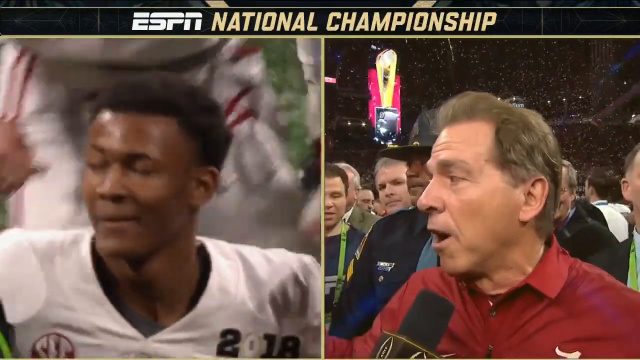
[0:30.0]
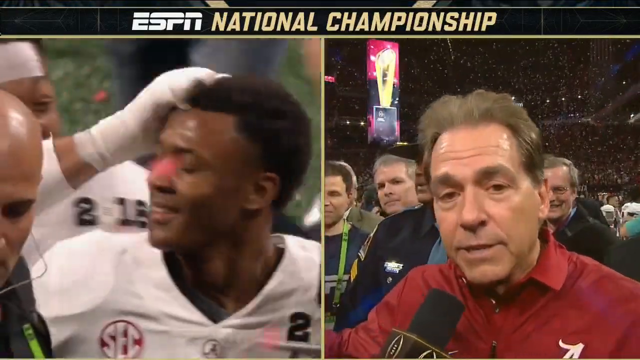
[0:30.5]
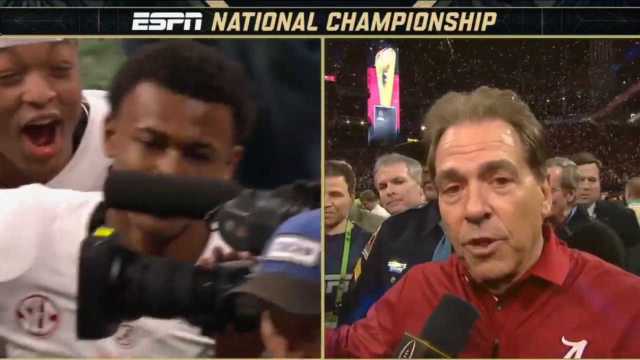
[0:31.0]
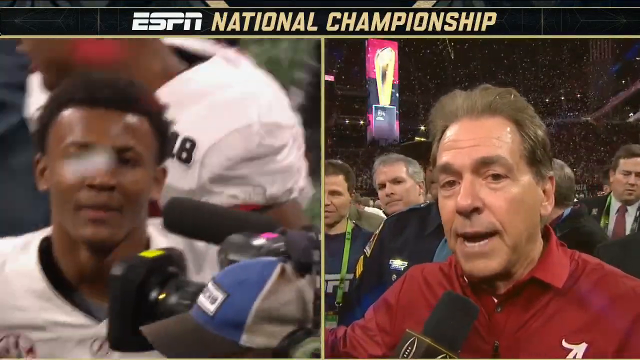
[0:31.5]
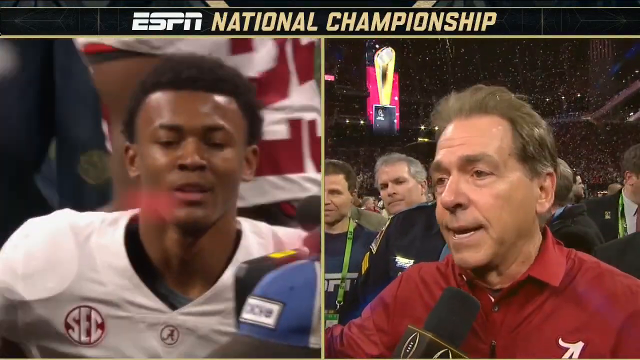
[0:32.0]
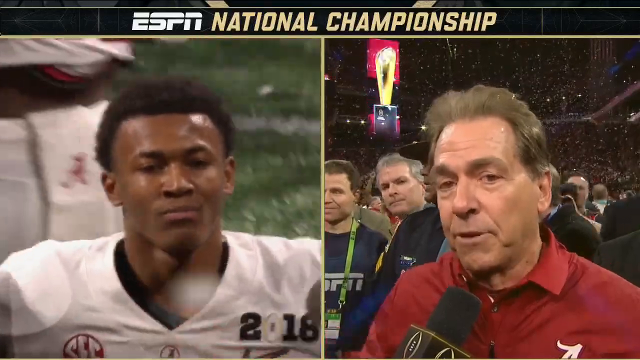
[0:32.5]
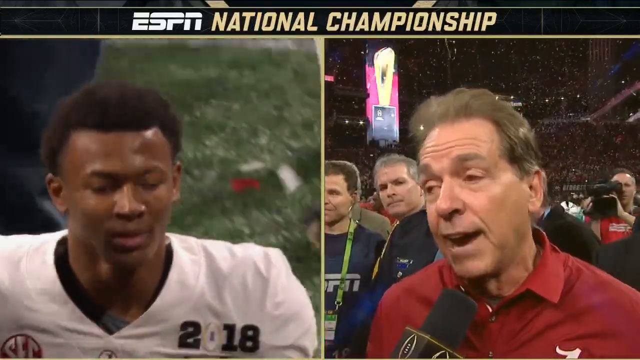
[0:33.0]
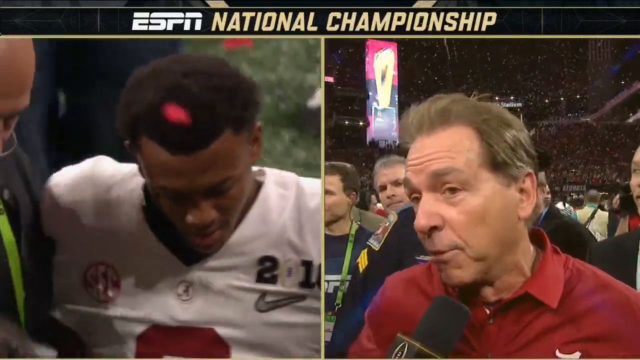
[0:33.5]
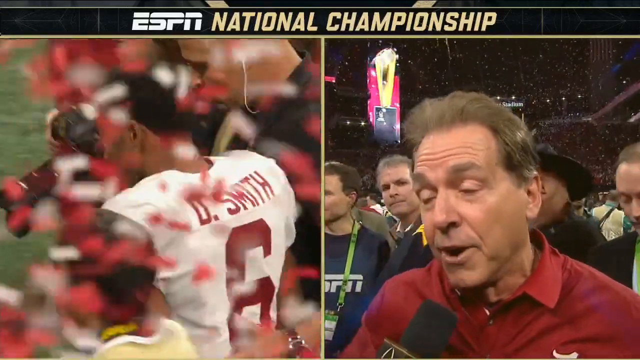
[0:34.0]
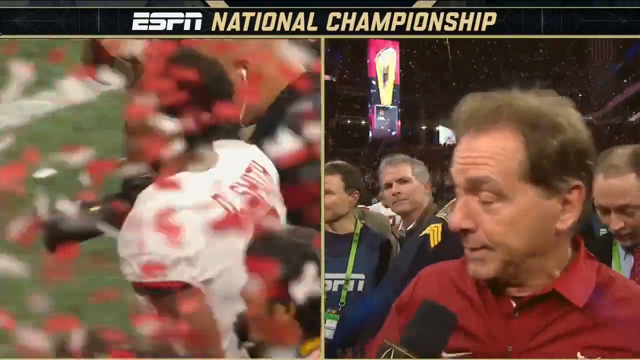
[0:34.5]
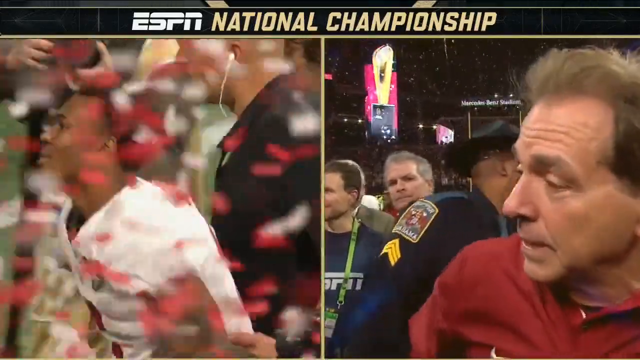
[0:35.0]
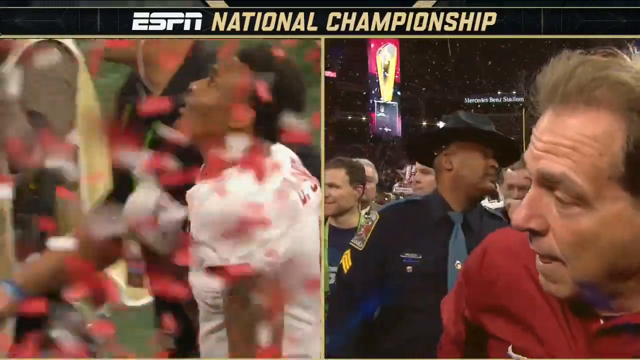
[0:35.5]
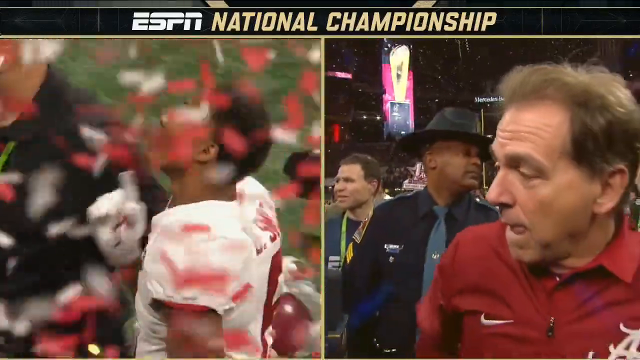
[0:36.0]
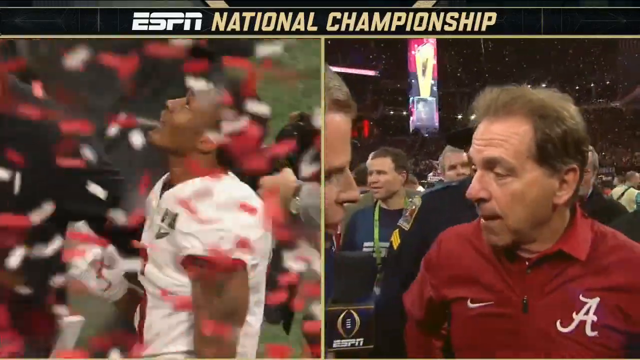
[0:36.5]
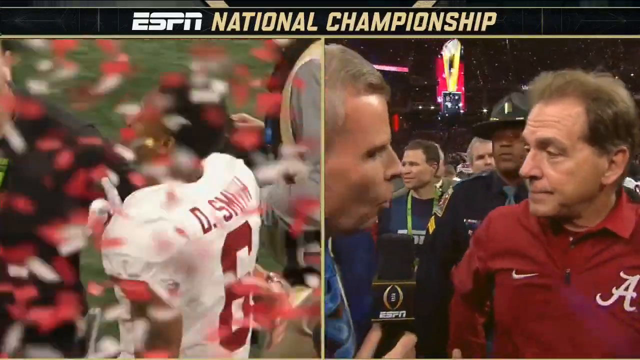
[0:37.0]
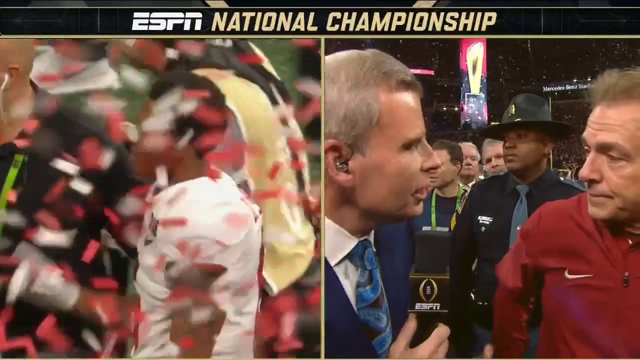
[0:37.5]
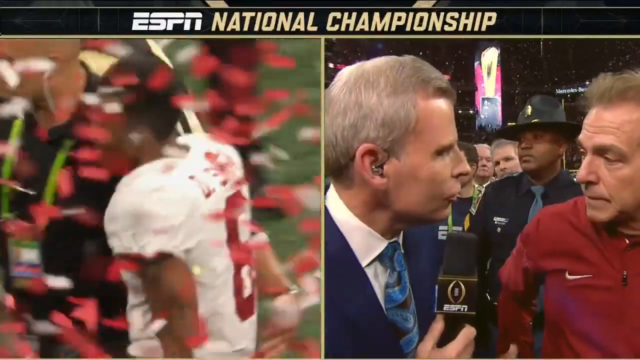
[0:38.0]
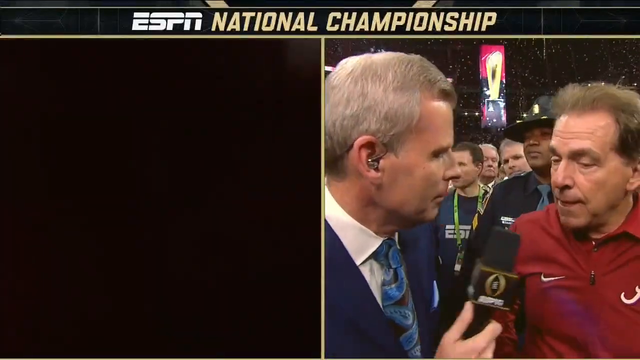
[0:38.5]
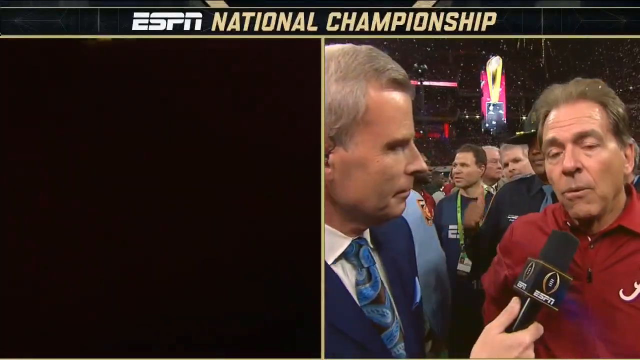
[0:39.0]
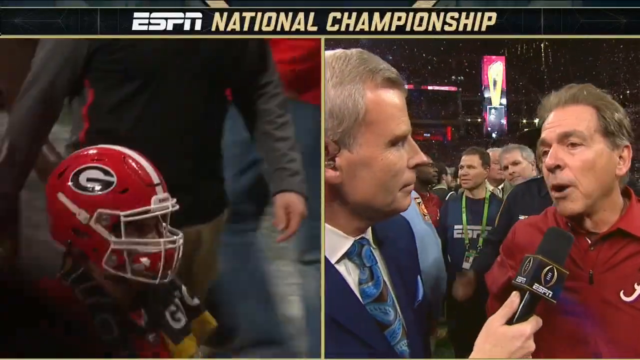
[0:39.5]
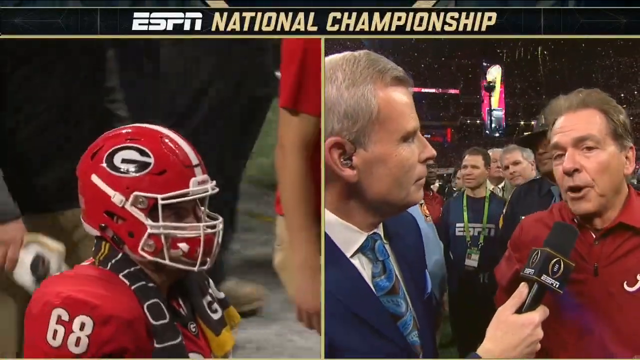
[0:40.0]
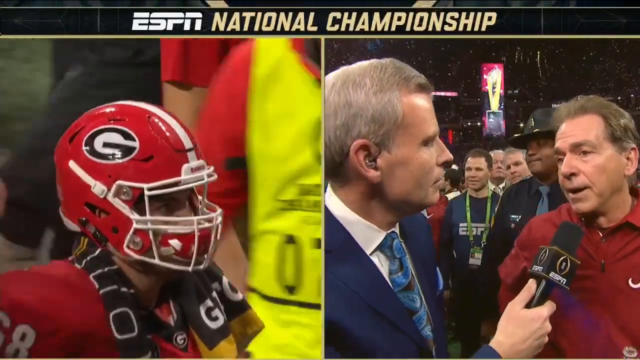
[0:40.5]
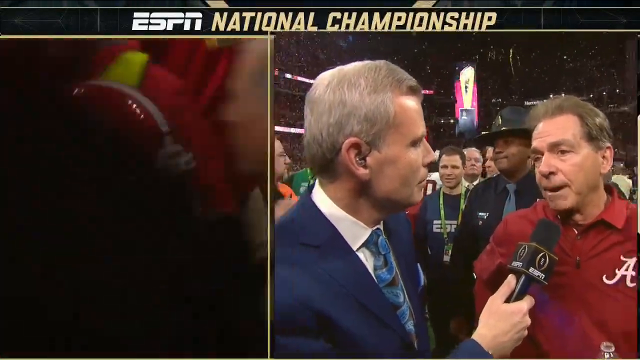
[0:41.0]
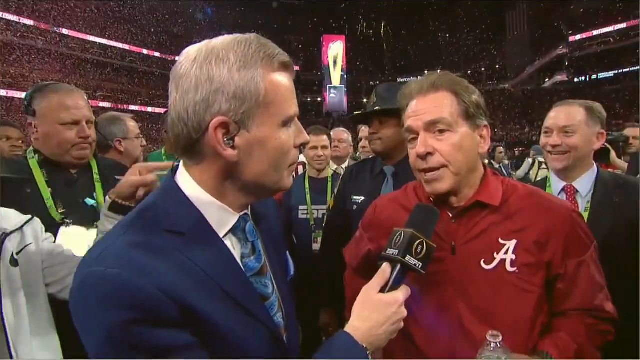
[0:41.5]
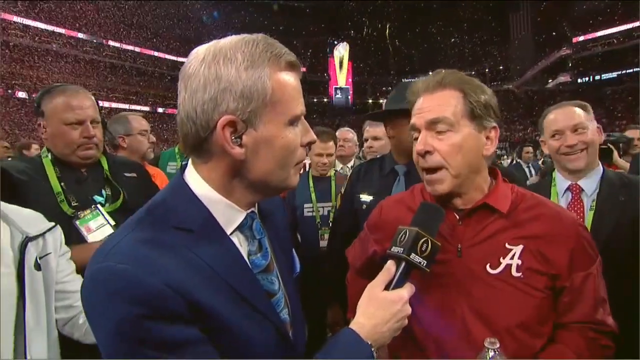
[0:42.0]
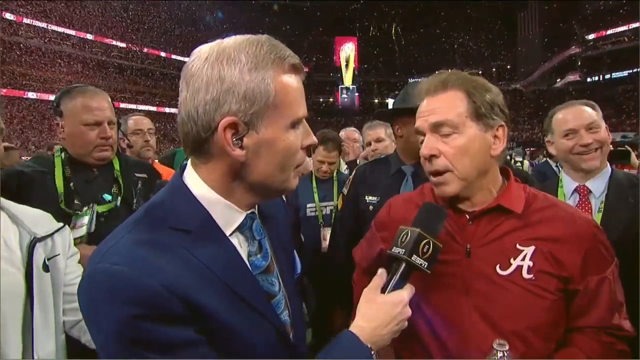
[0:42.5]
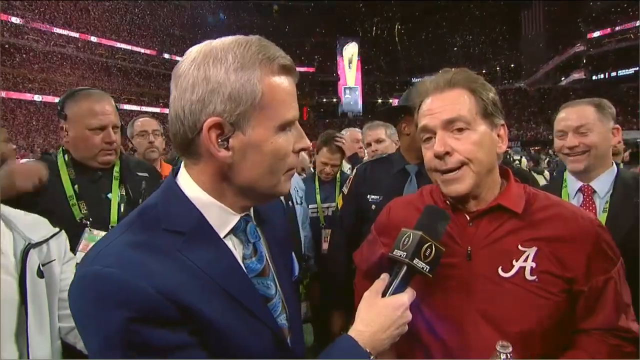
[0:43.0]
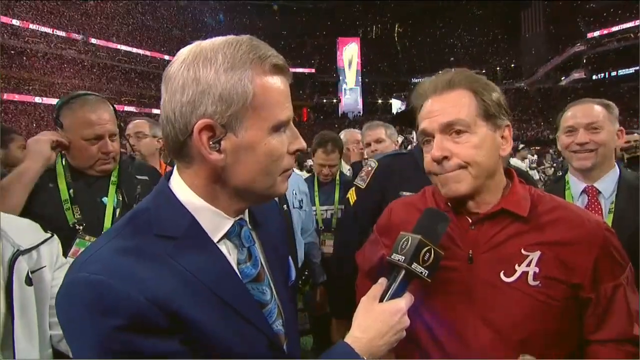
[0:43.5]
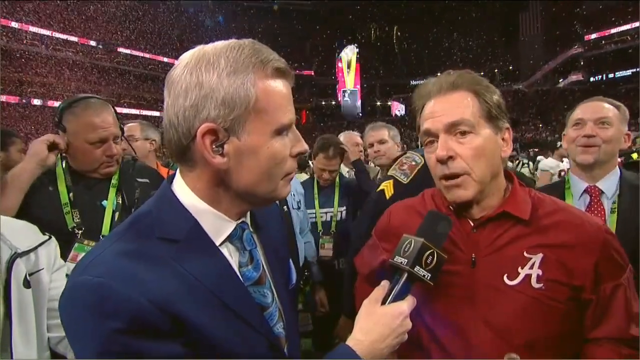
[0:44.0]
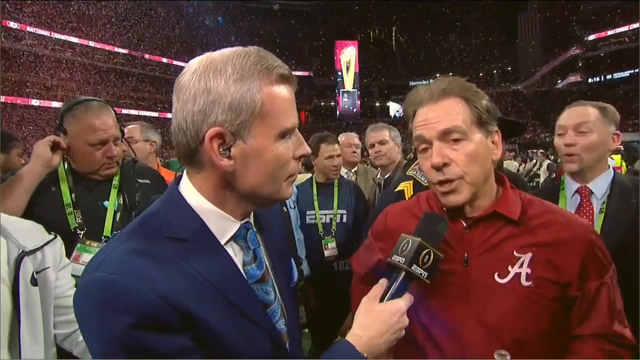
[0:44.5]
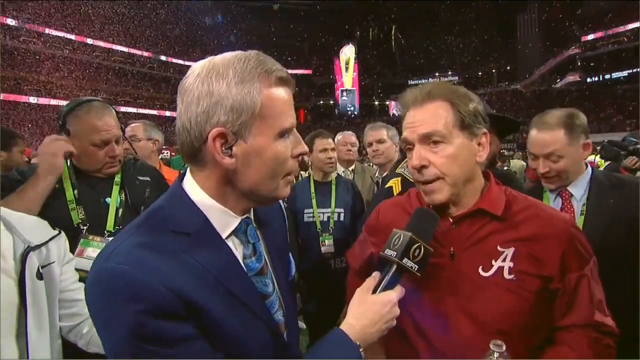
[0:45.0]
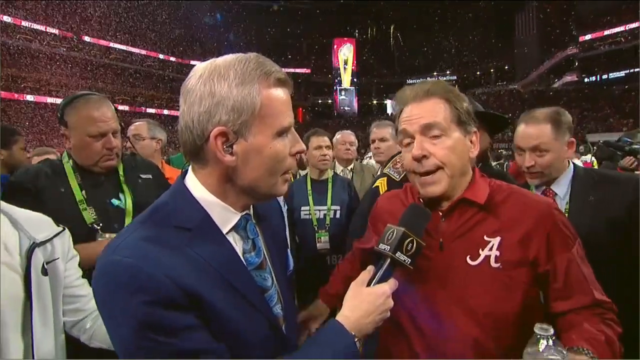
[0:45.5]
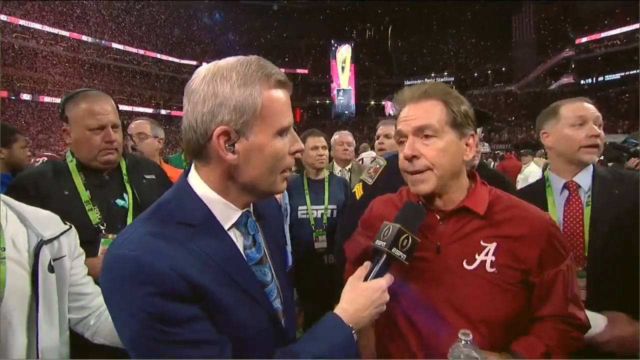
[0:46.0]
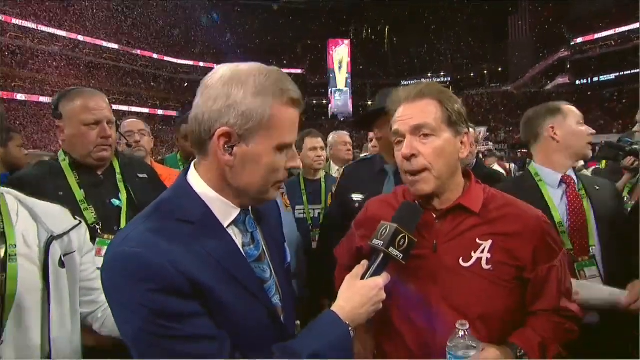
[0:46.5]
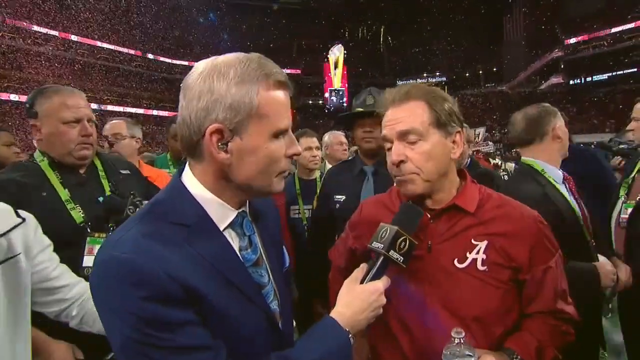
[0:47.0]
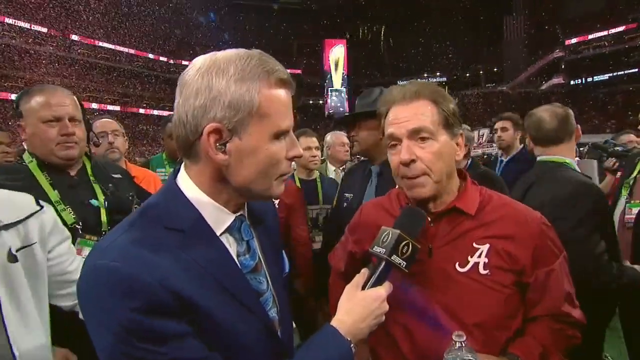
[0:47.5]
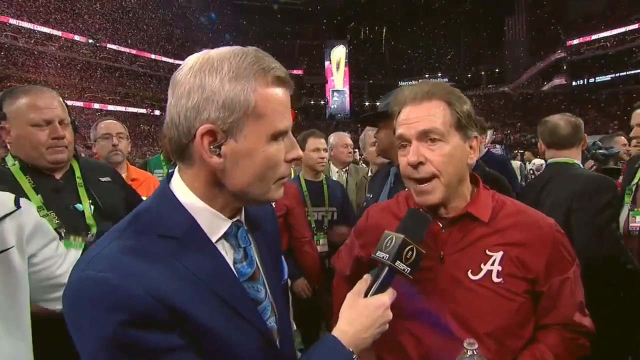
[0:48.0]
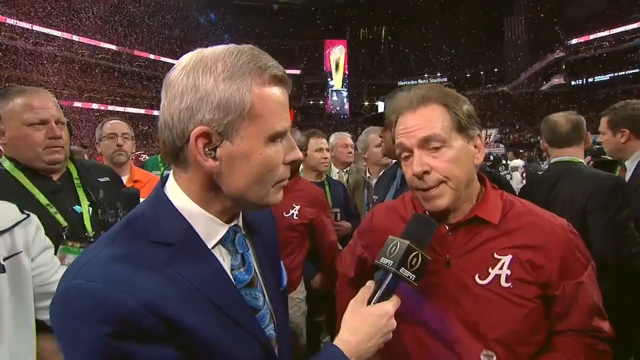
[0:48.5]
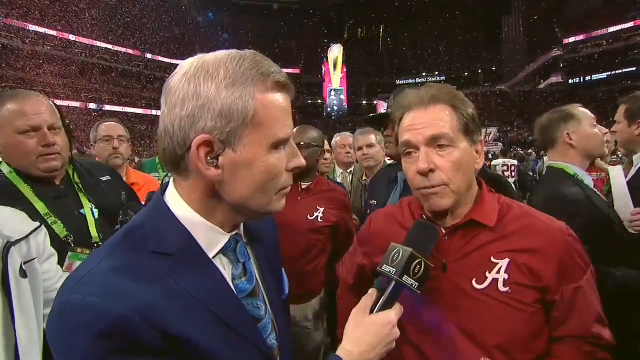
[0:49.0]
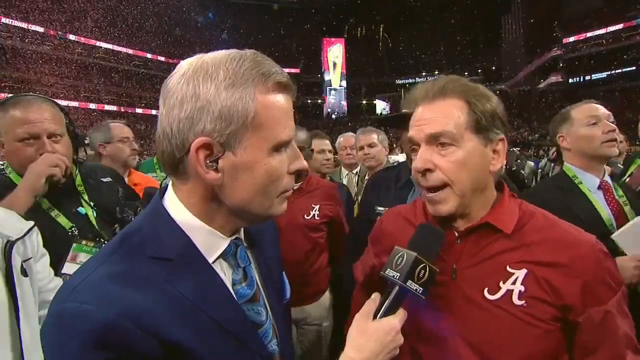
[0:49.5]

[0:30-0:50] An ESPN commentator interviews Alabama coach Nick Saban. The screen flashes to the Alabama quarterback, who talks briefly, and shows Alabama players celebrating and Georgia players who are disappointed. Players, coaches, commentating staff and videography staff are all still on the football field as confetti rains down around everyone. None of the Georgia players are interviewed, though the Georgia quarterback gets a little screen time toward the end. It seems to be a big celebration.